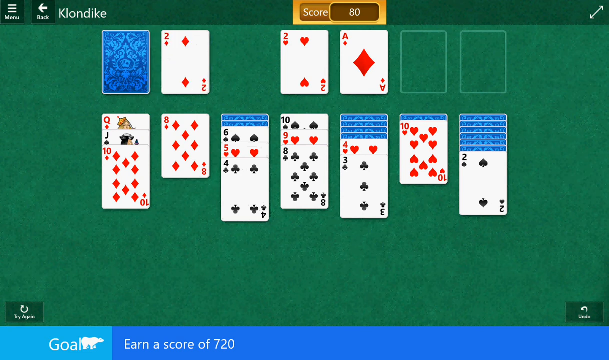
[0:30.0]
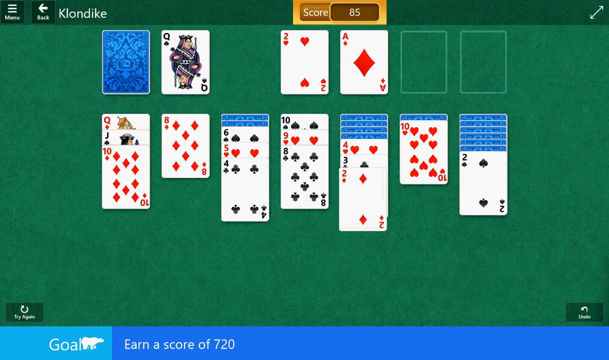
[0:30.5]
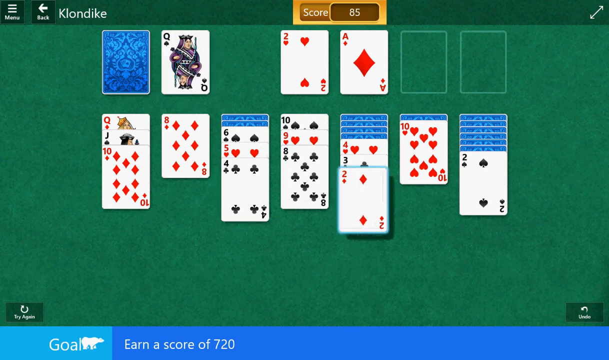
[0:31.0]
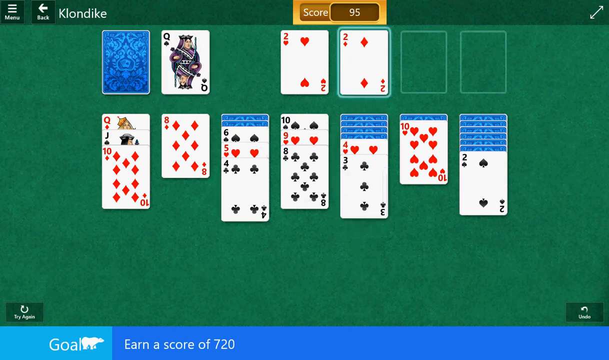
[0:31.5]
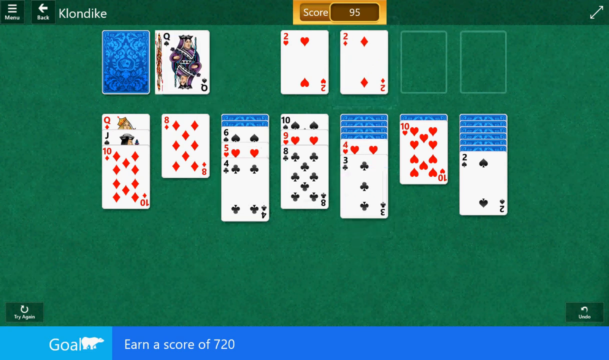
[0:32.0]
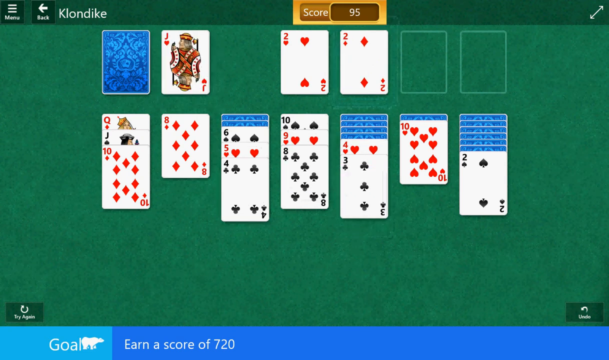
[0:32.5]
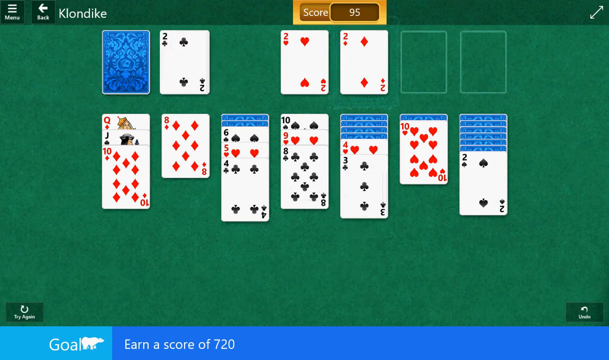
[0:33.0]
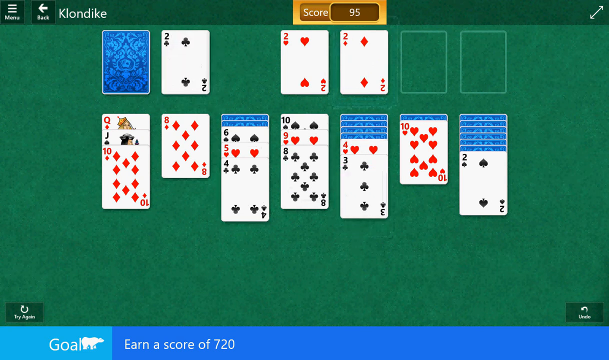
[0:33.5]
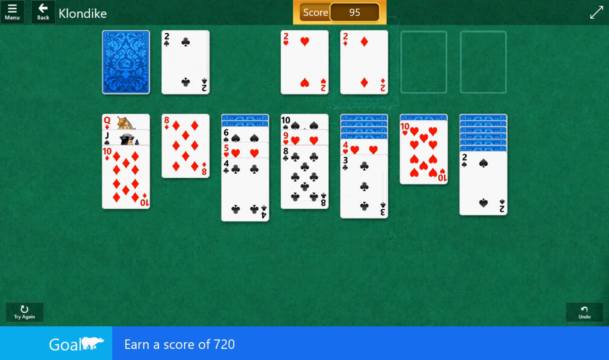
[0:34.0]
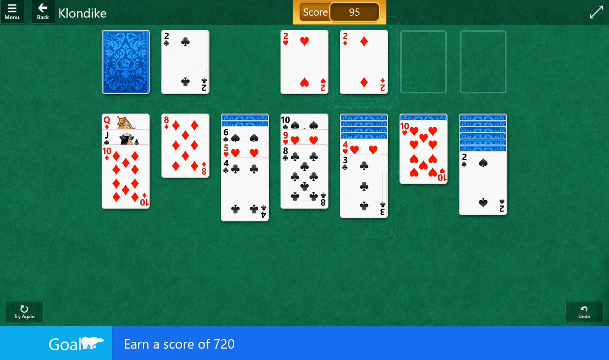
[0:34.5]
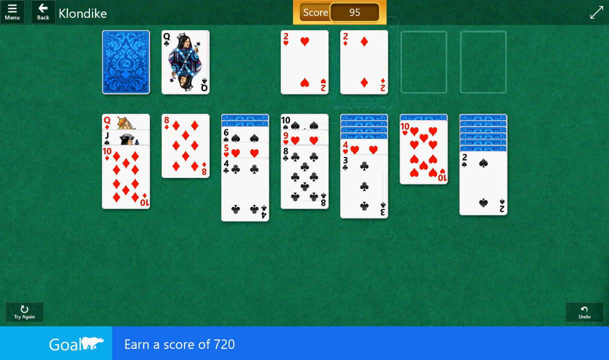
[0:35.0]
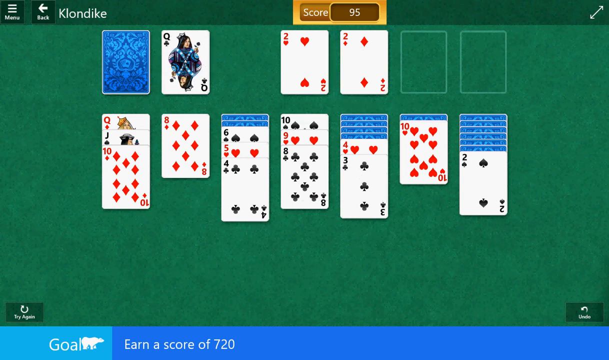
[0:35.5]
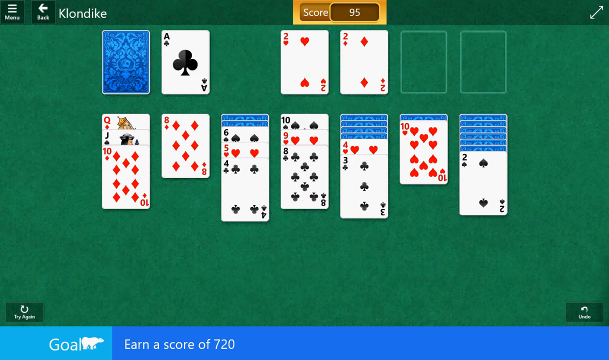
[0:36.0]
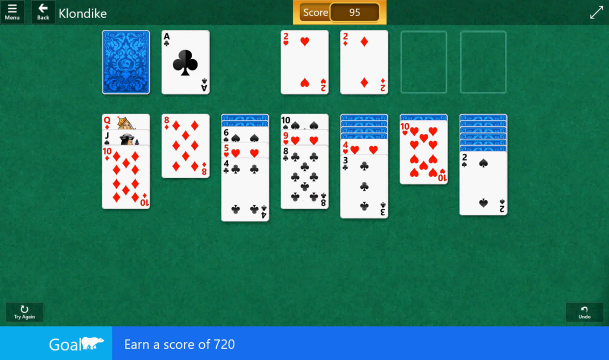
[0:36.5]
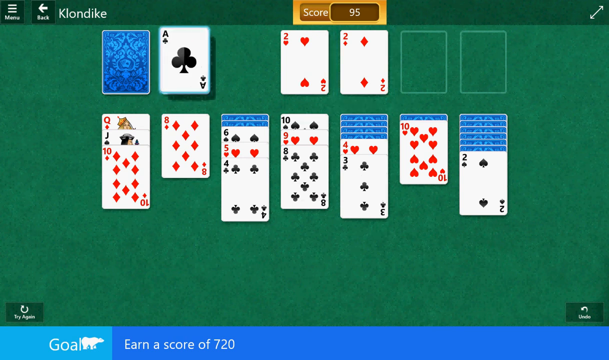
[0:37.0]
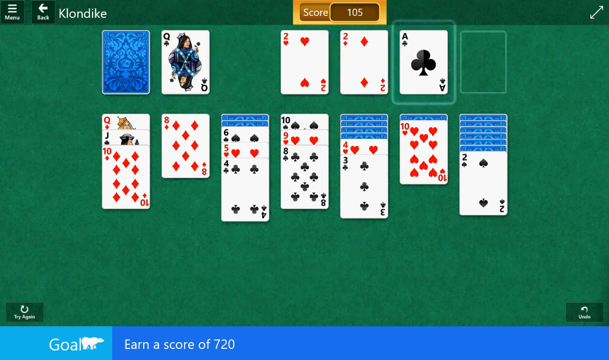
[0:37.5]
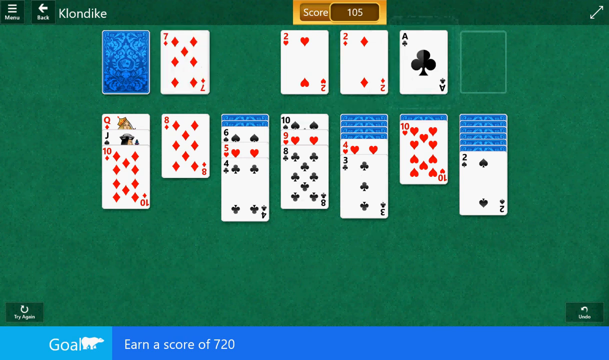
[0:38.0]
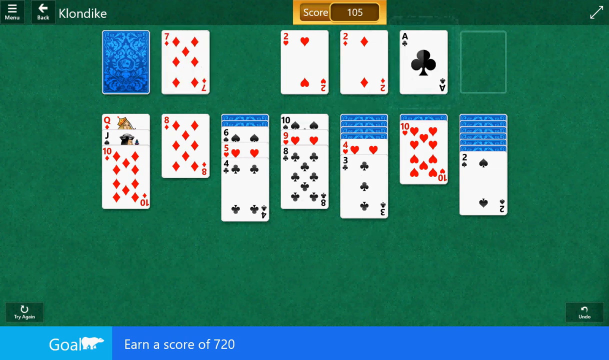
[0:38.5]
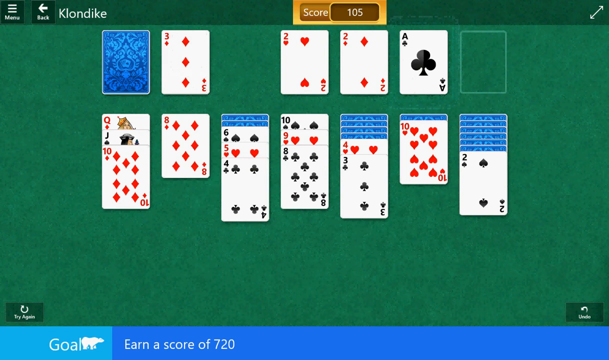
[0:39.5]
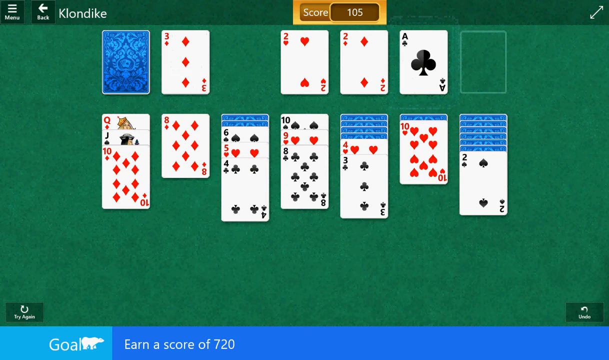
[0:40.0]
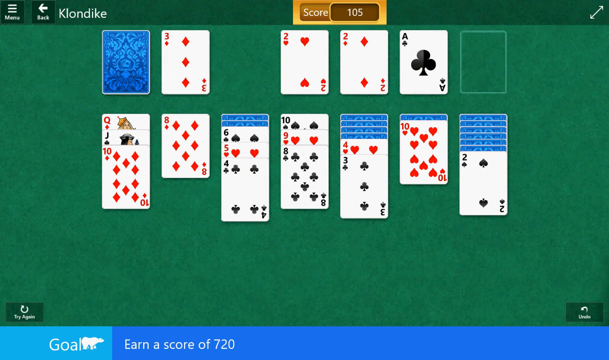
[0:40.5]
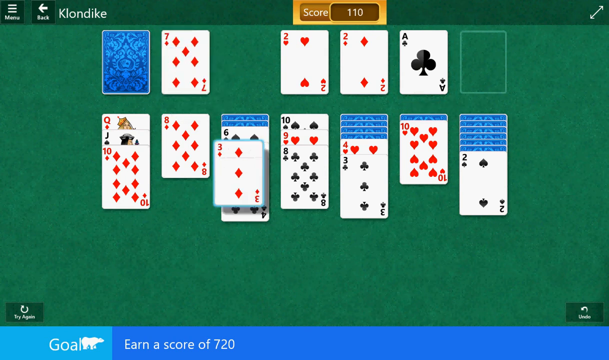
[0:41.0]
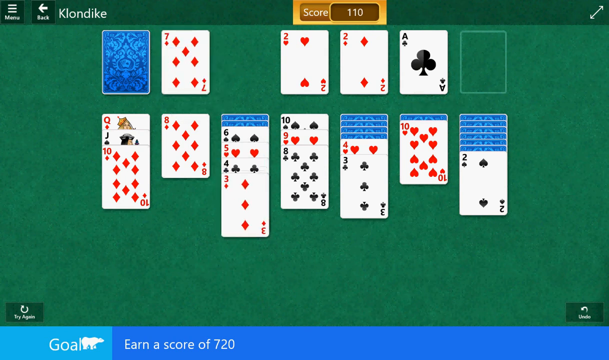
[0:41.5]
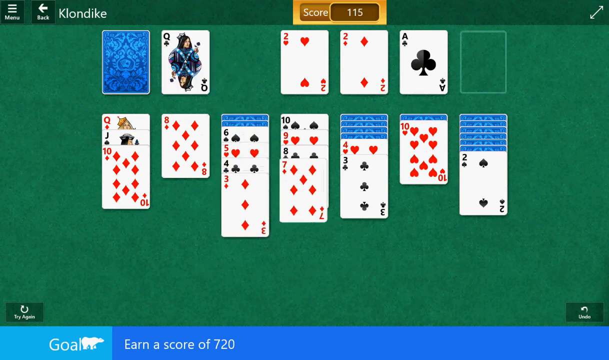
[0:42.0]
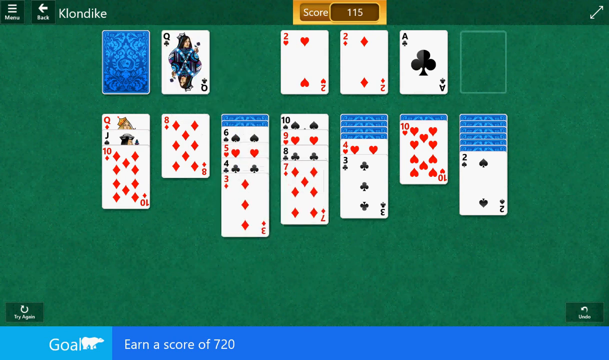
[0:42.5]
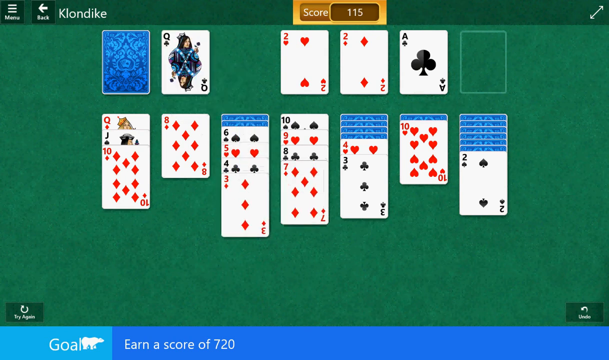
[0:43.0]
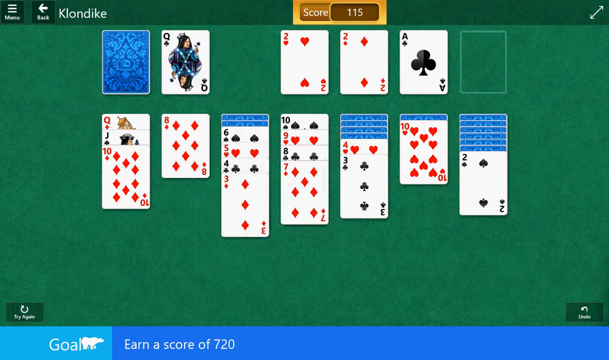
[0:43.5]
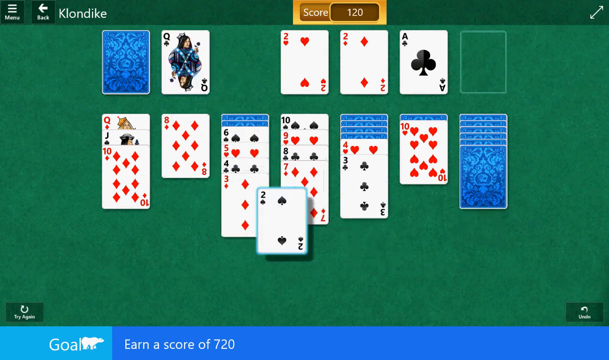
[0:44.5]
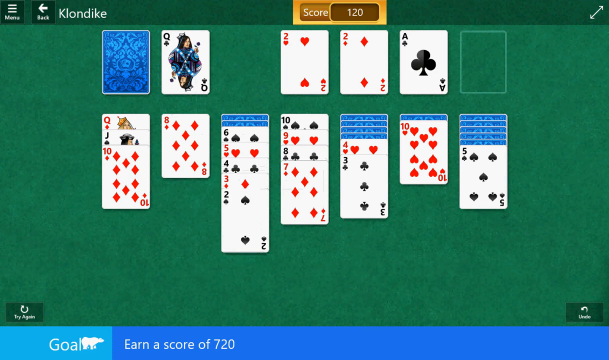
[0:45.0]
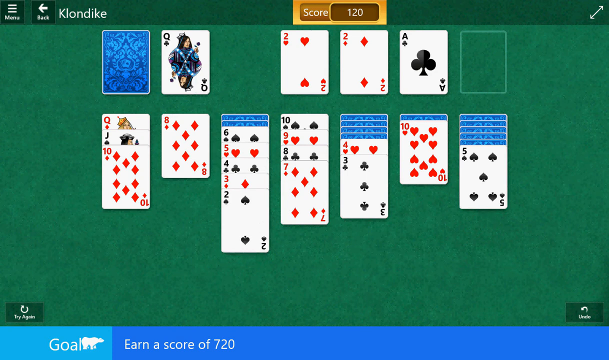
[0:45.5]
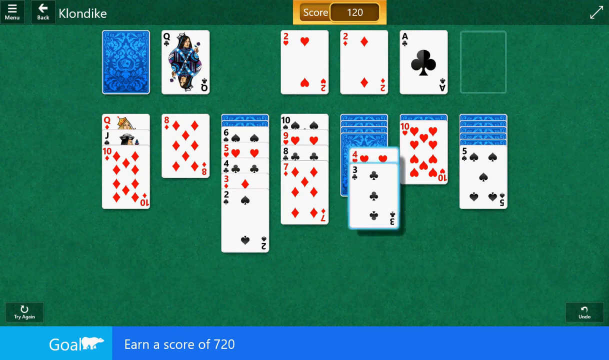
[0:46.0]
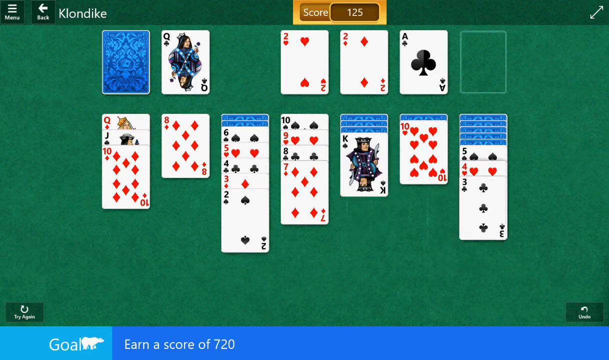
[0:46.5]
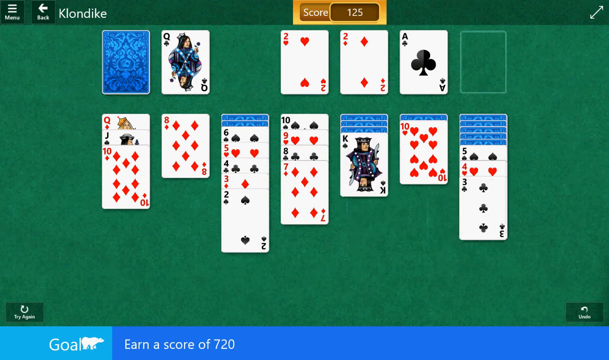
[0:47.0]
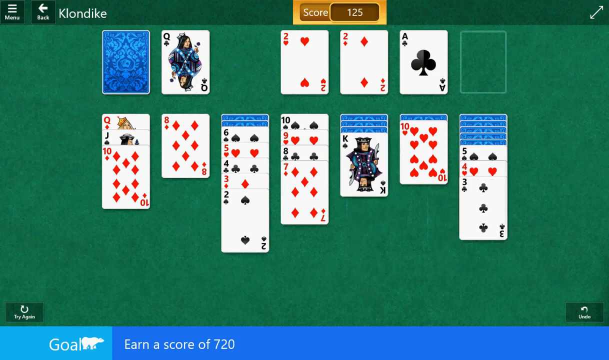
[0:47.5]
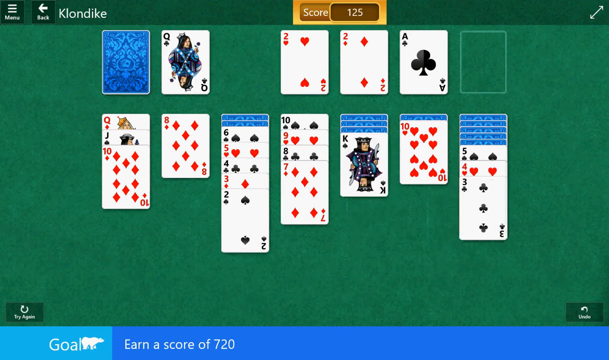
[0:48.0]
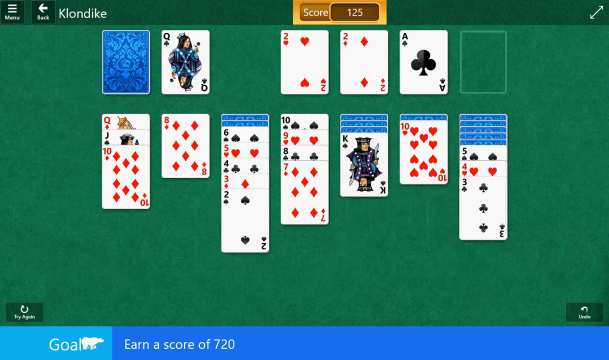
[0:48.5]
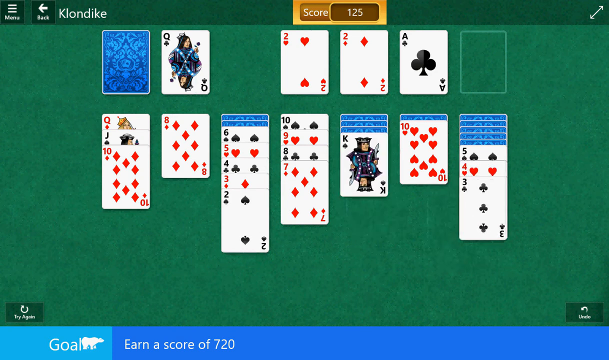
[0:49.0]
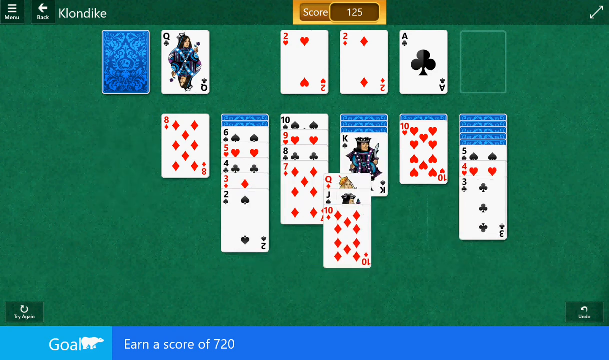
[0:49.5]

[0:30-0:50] Someone is playing a game called Klondike, a form of solitaire, on their computer. The whole background is green, the card backs are a kind of paisley blue, and the face-up cards are regular white cards, some red with hearts and diamonds and some black with clubs and spades. In the upper right corner is an option to make the game full screen. In the upper left corner are a menu with three bars, a back button with an arrow pointing to the left, and the word "Klondike". Cards are moved to different locations or moved up; the two of hearts is already up on the ace, along with the two of diamonds, and now the ace of clubs is put up at the top.